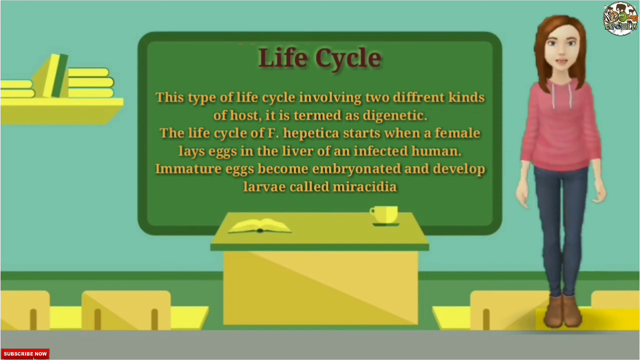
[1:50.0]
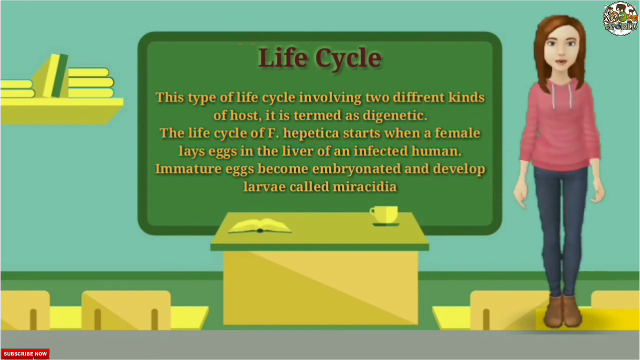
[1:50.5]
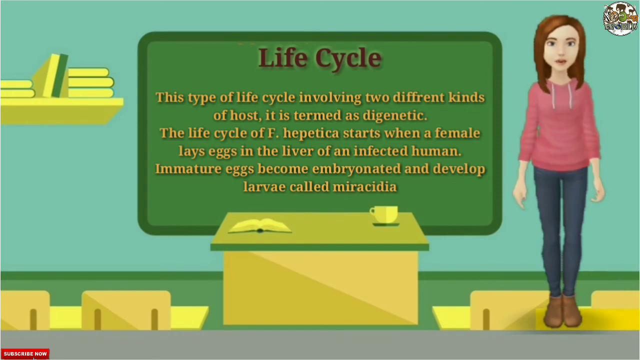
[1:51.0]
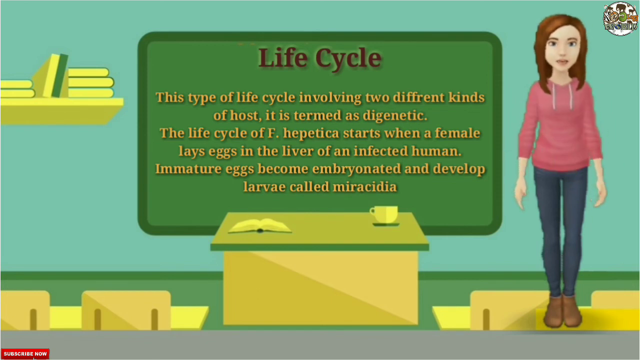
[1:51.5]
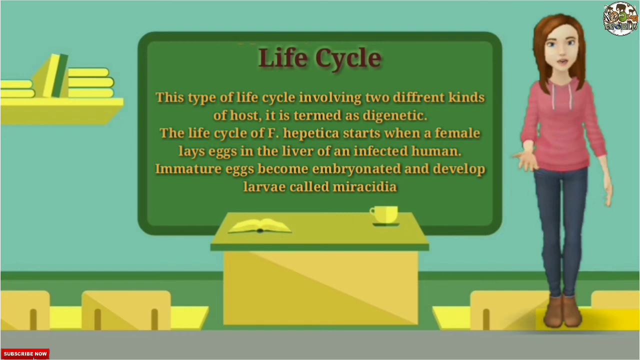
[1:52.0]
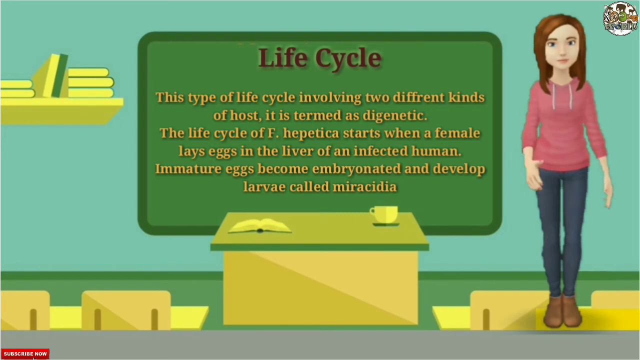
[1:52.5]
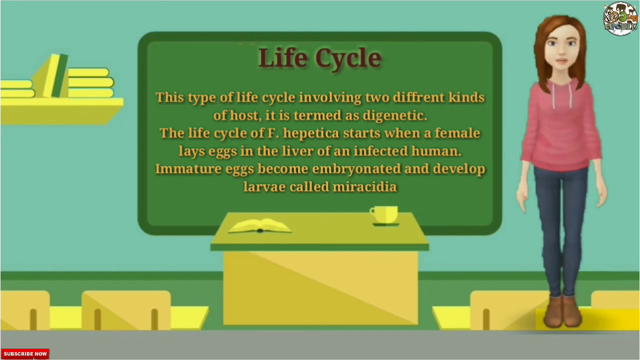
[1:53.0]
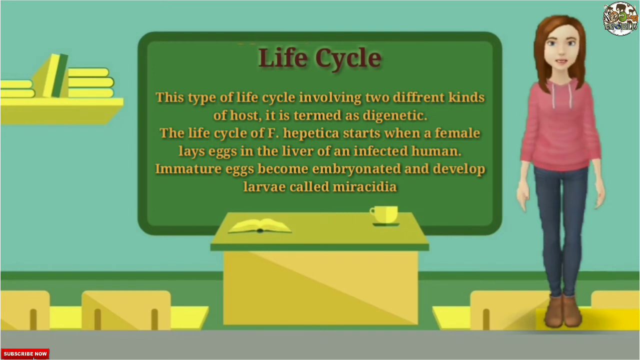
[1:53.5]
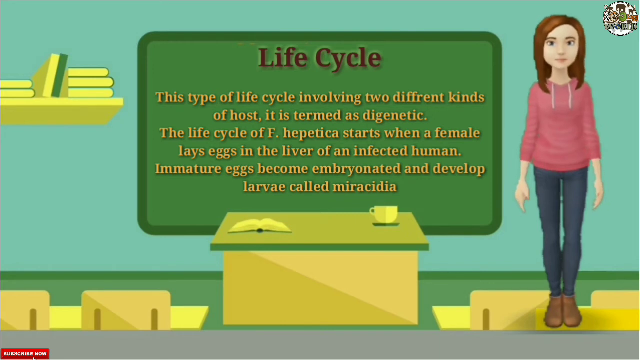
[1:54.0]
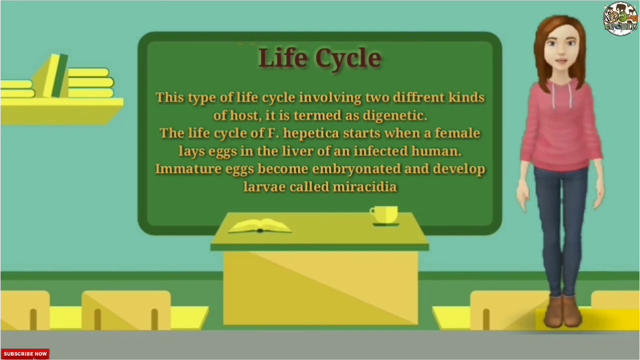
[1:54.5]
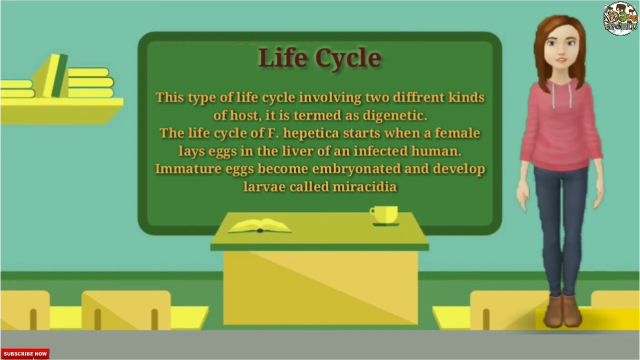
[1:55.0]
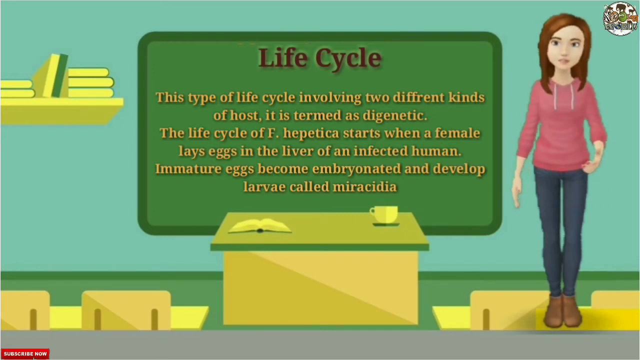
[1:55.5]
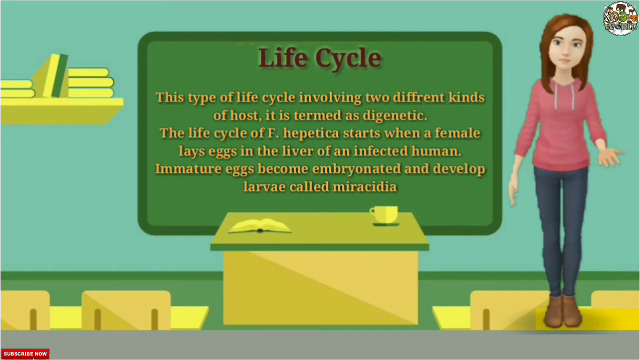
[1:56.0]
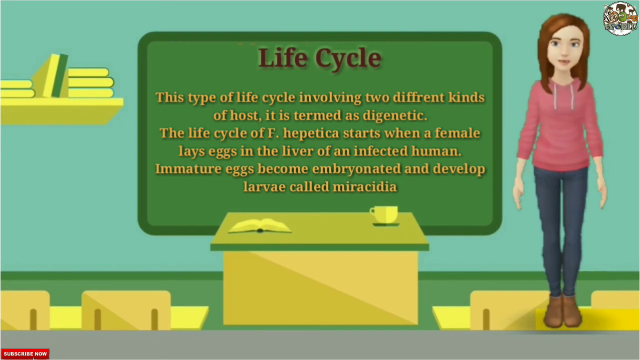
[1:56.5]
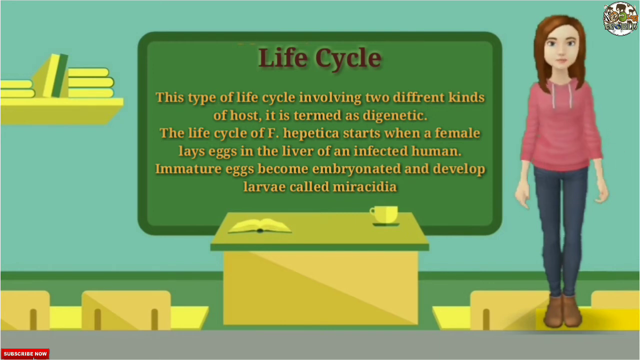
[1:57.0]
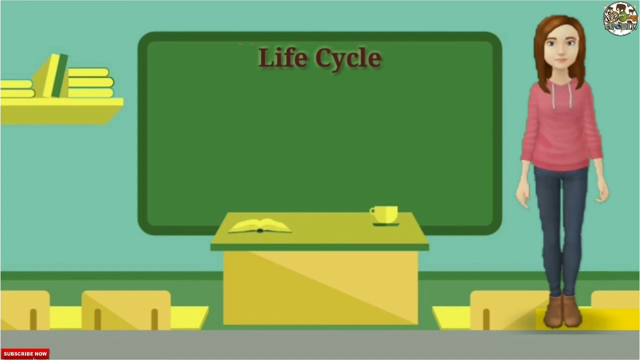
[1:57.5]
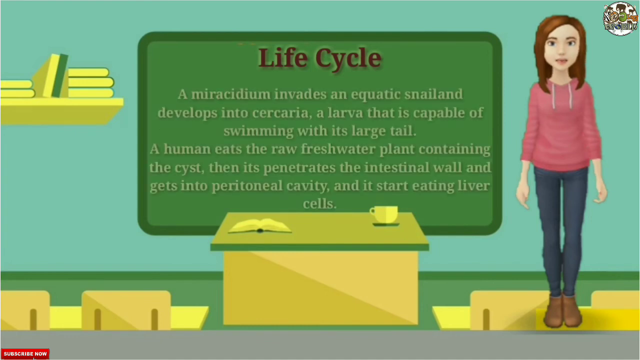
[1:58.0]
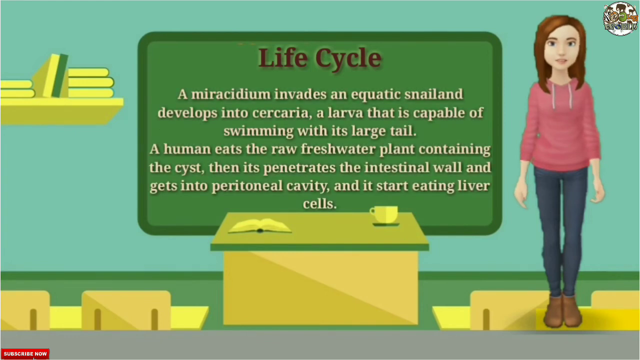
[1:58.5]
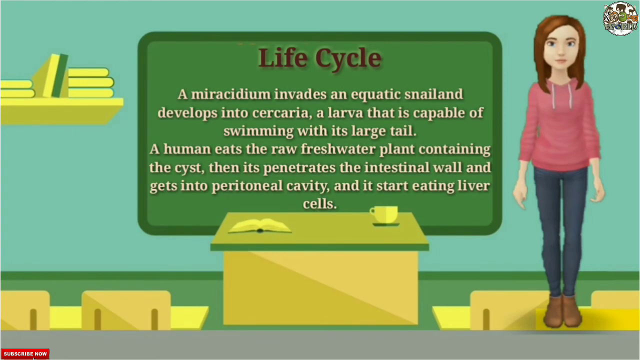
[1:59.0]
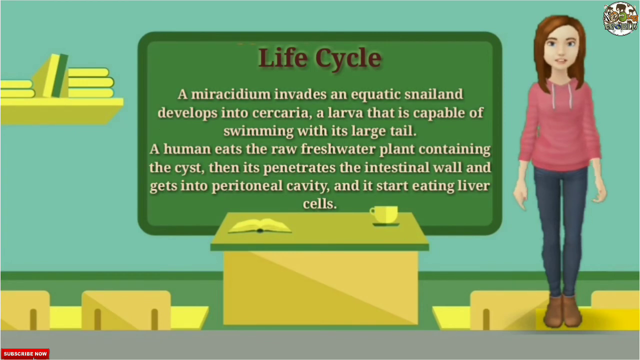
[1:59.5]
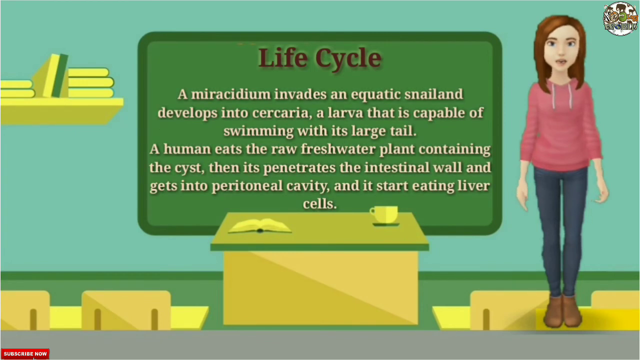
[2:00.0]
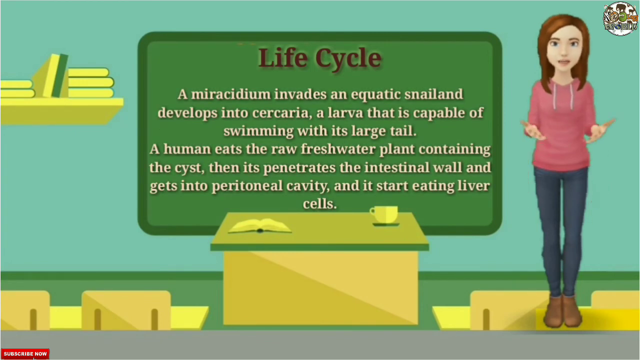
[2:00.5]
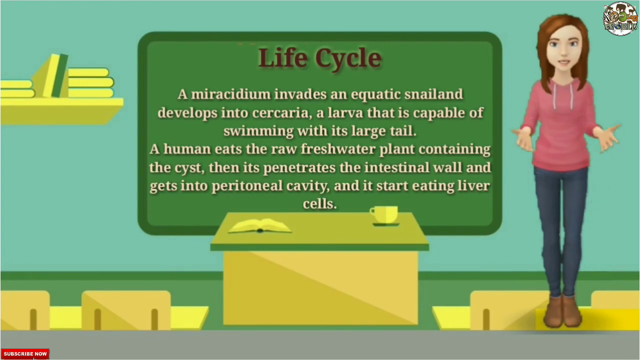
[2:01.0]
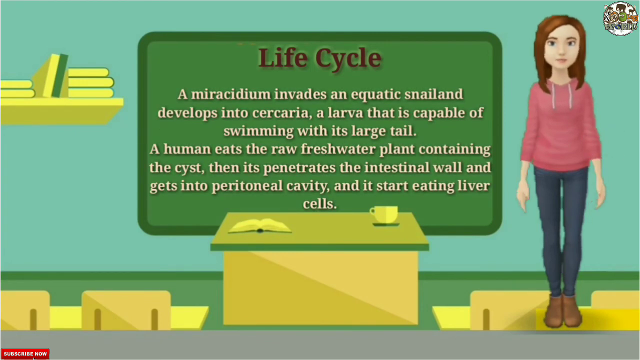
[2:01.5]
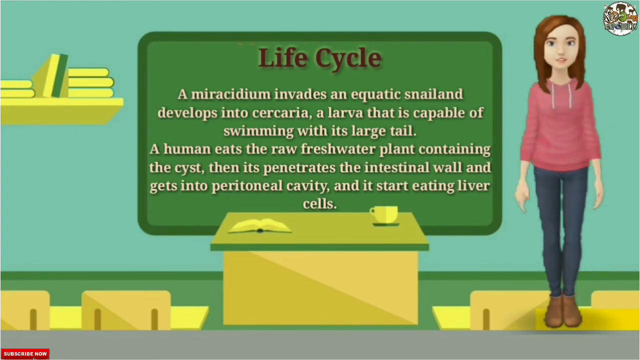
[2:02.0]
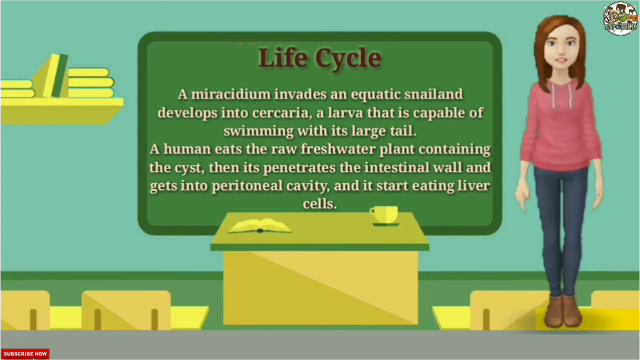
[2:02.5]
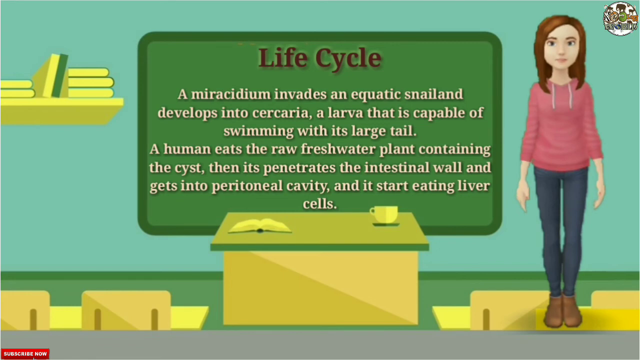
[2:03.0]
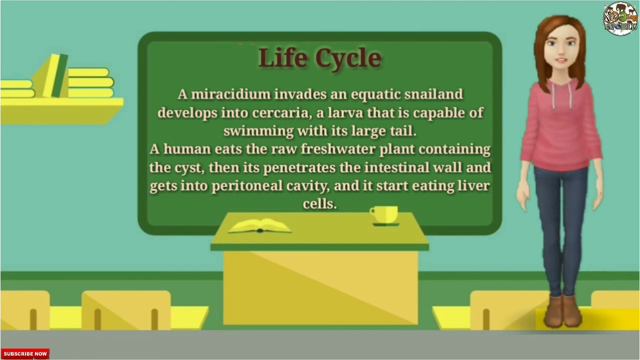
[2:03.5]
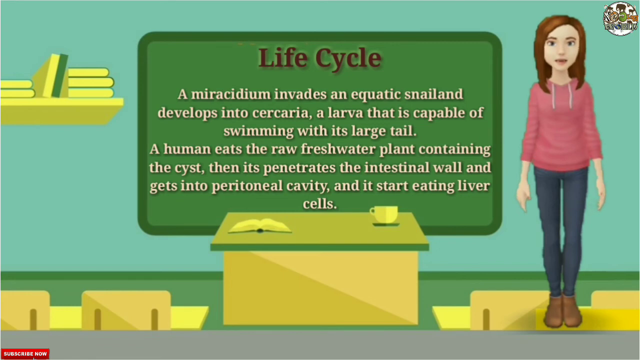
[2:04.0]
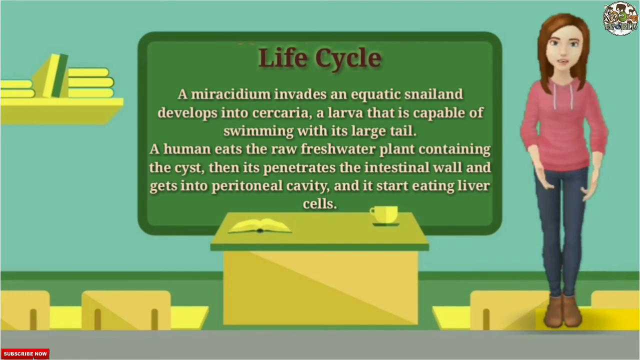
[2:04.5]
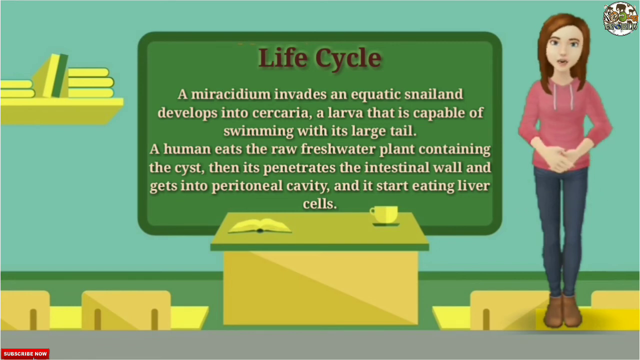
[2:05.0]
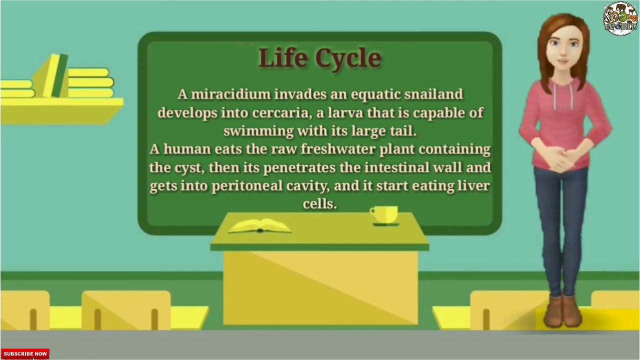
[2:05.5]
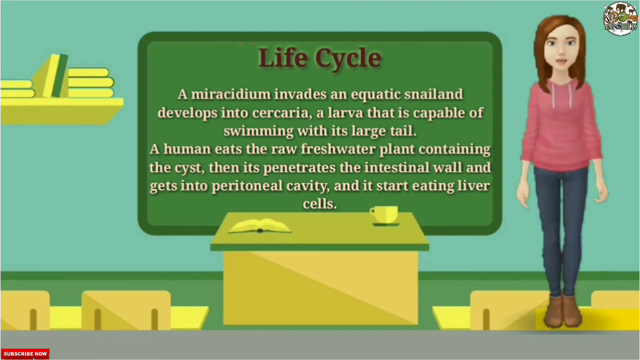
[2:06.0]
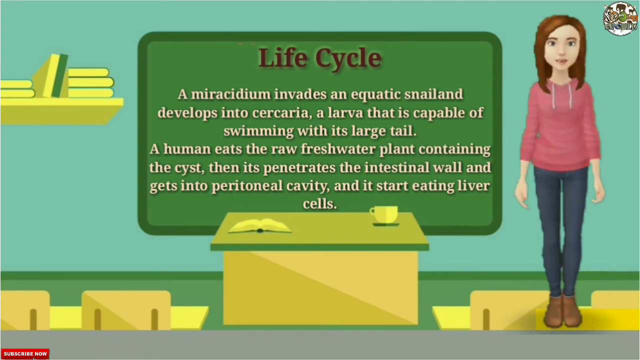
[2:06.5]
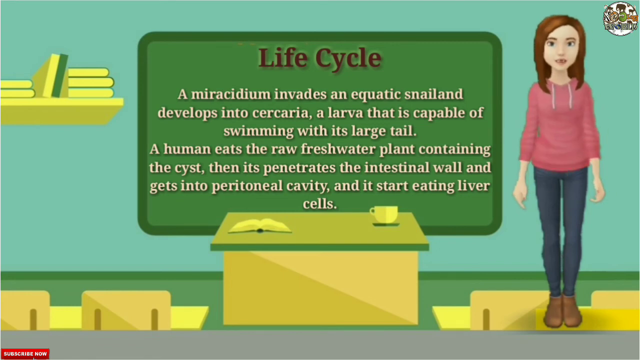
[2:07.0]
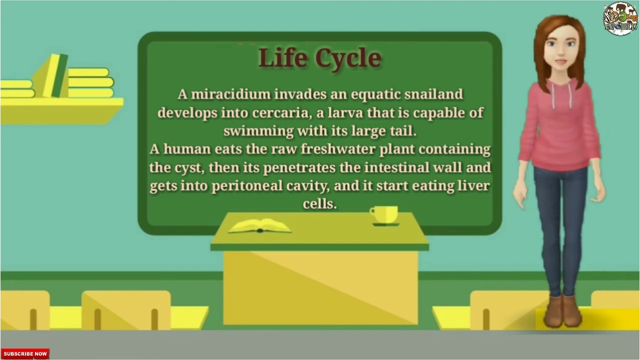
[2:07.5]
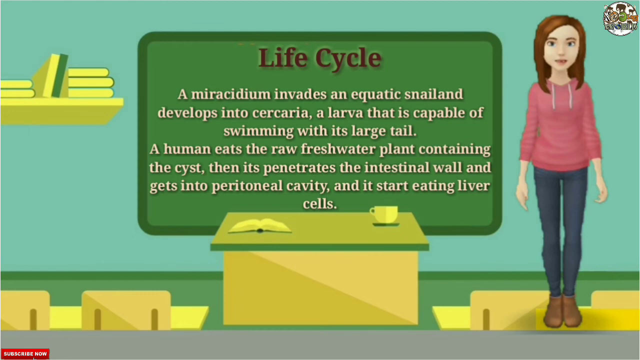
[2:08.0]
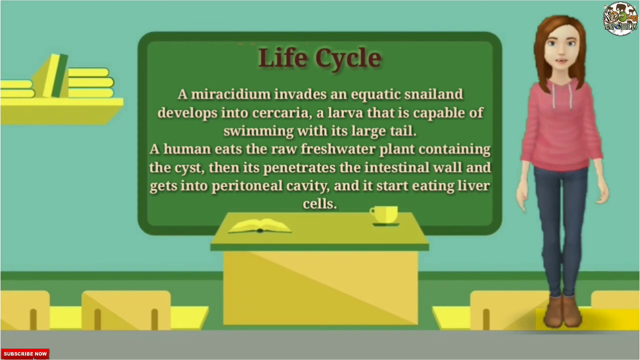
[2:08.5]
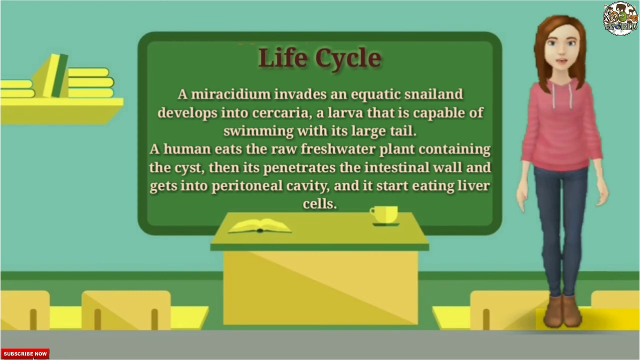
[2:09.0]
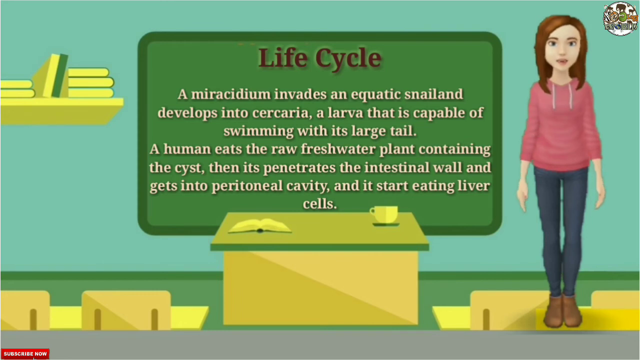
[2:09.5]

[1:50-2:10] The teacher stands at the front of the classroom presenting the information displayed on the blackboard, which has the title "life cycle" with white text below it reading "mericidium invades an aquatic snail and develops into cesarea, a larva that is capable of swimming with its large tail. A human eats the raw freshwater plant containing the cyst, then it penetrates the intestinal wall and gets into peritoneal cavity and it starts eating liver cells." The animated woman wears a pink hoodie, blue jeans and brown boots, and has long black-brown hair that reaches just to her shoulders. She stands on the right side of the screen, with a small Zoology World logo tucked into the top right corner. She seems to be in an animated classroom, with a desk in front of the blackboard and a few student desks in front of the teacher's desk. Toward the top left of the screen is a protruding bookshelf holding seven books: two stacked horizontally, two standing vertically, and three more stacked horizontally.